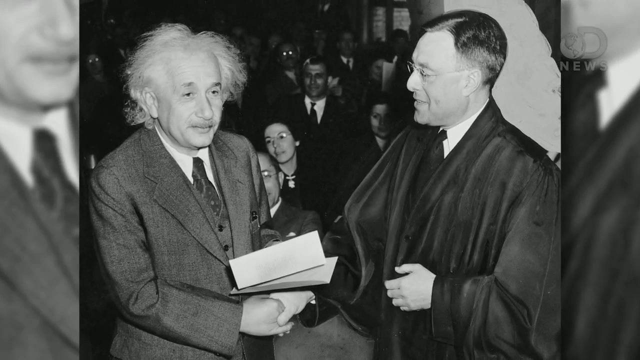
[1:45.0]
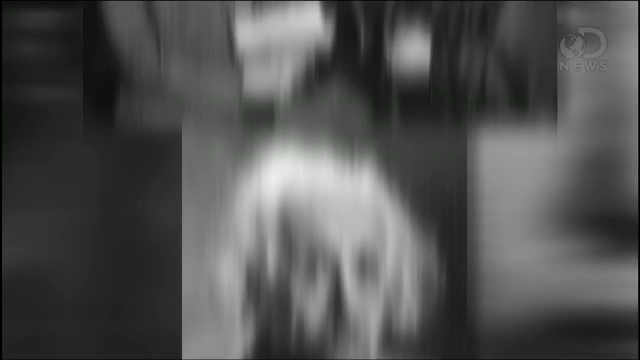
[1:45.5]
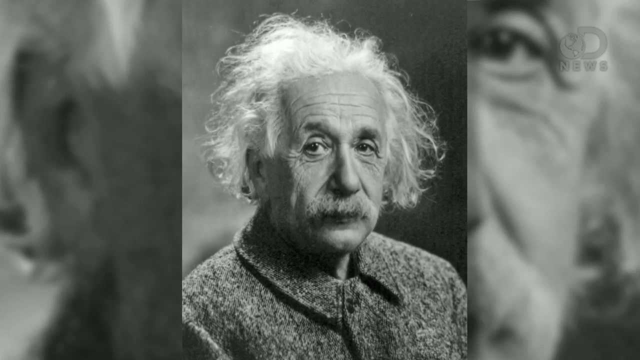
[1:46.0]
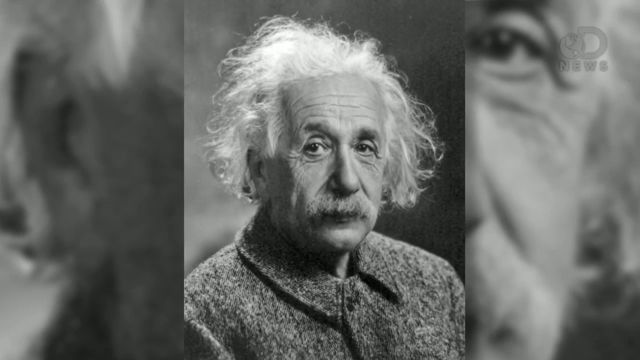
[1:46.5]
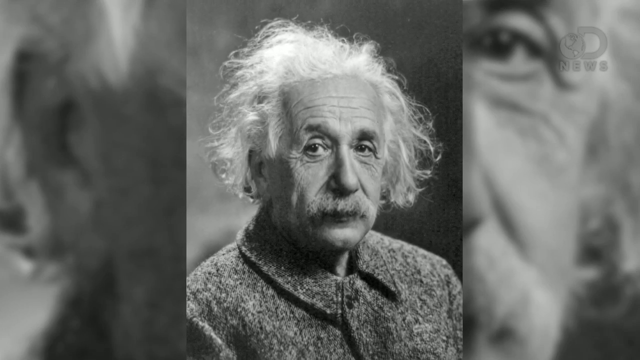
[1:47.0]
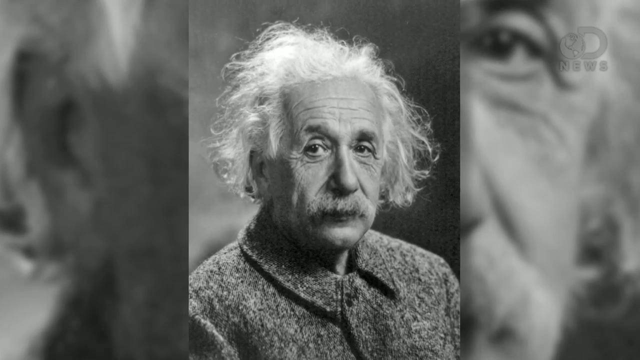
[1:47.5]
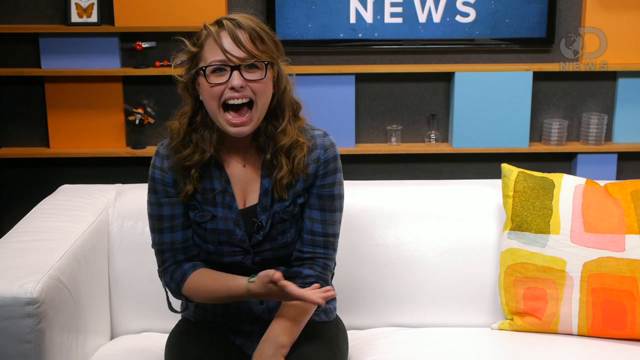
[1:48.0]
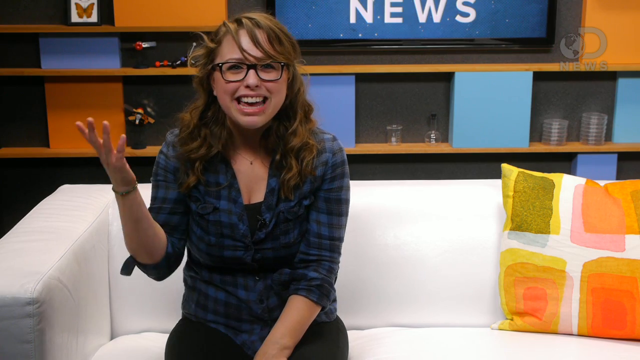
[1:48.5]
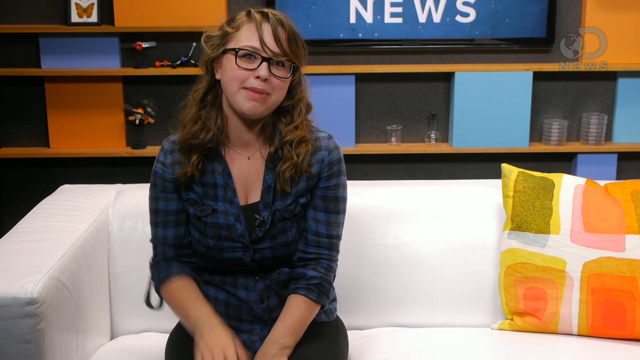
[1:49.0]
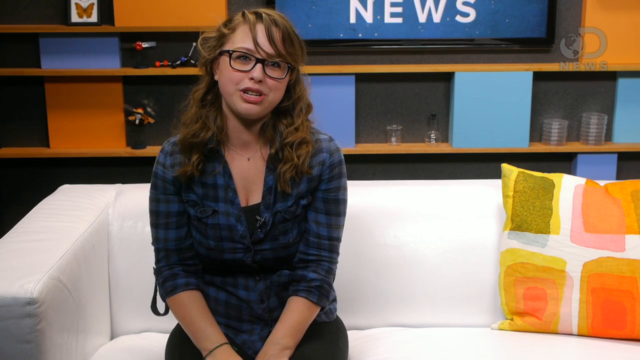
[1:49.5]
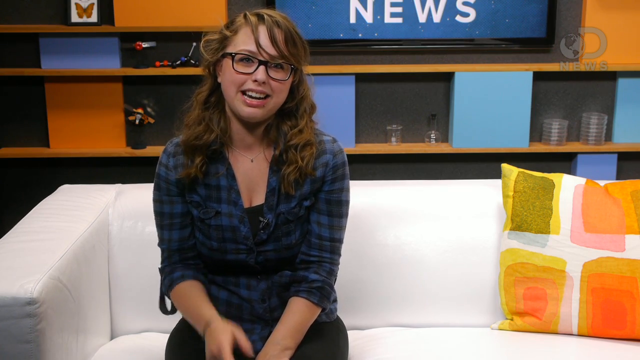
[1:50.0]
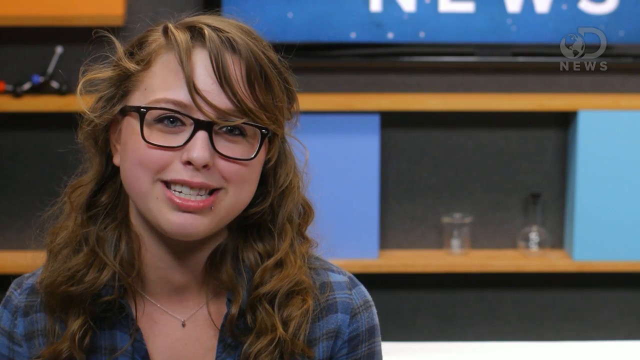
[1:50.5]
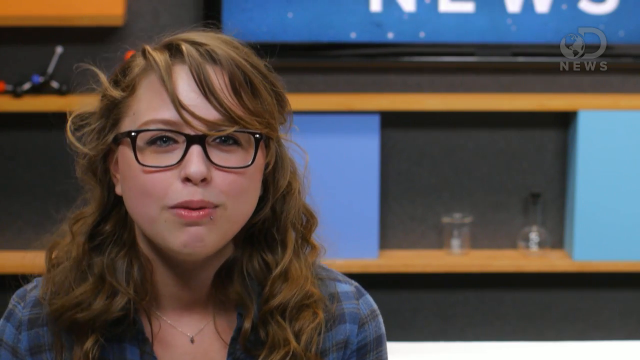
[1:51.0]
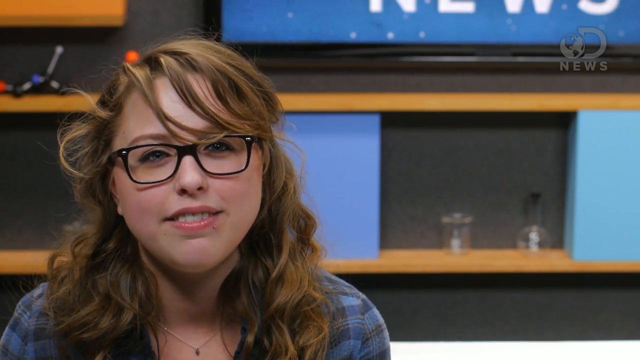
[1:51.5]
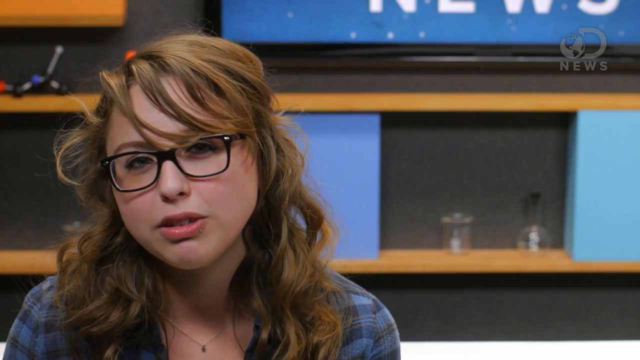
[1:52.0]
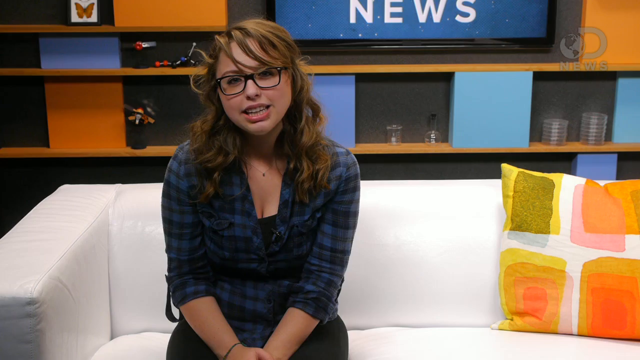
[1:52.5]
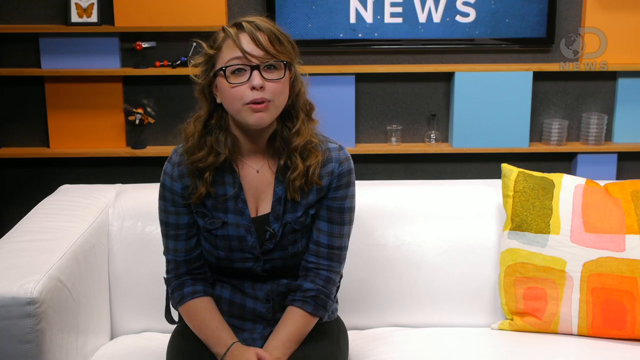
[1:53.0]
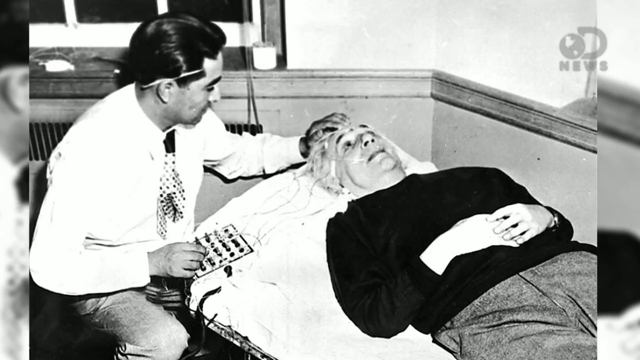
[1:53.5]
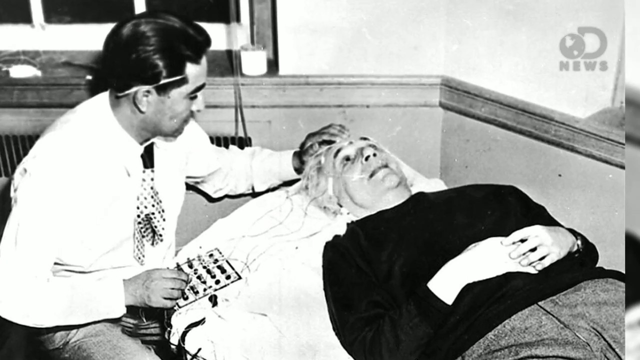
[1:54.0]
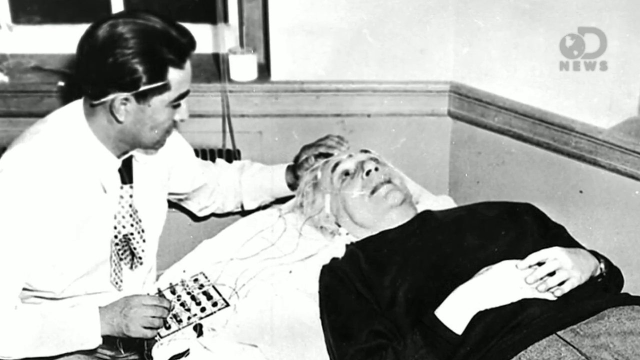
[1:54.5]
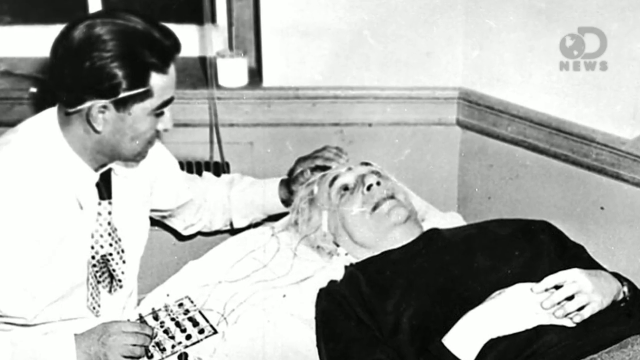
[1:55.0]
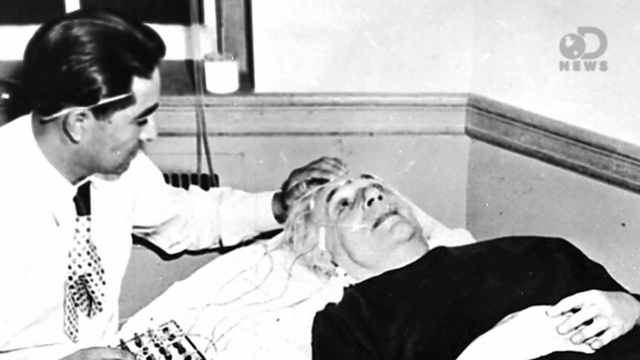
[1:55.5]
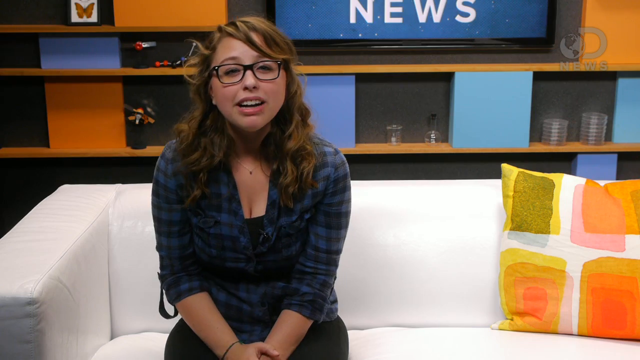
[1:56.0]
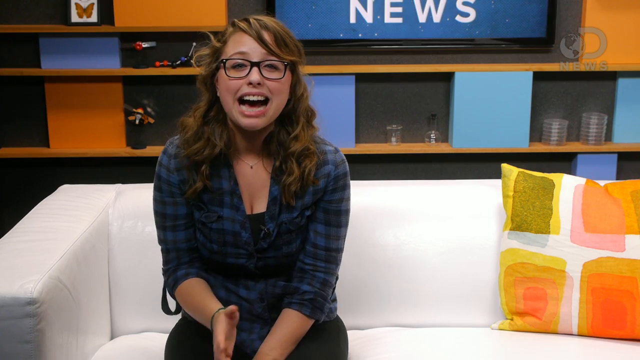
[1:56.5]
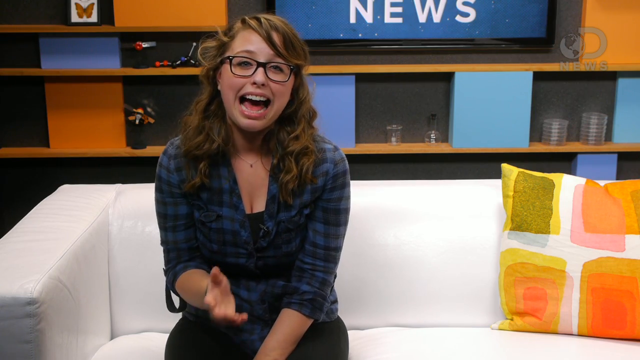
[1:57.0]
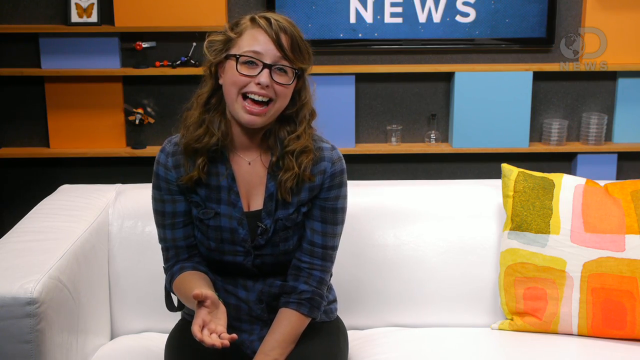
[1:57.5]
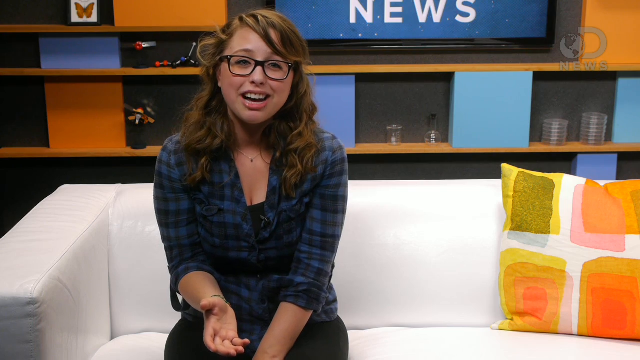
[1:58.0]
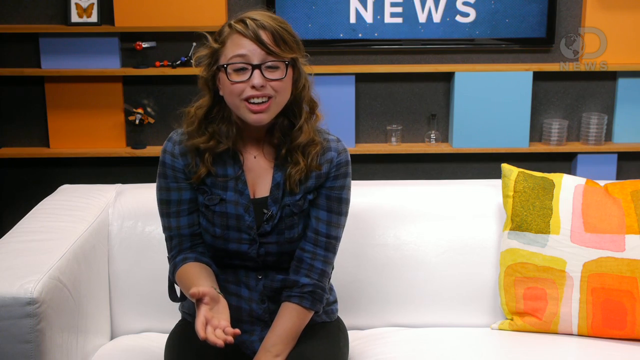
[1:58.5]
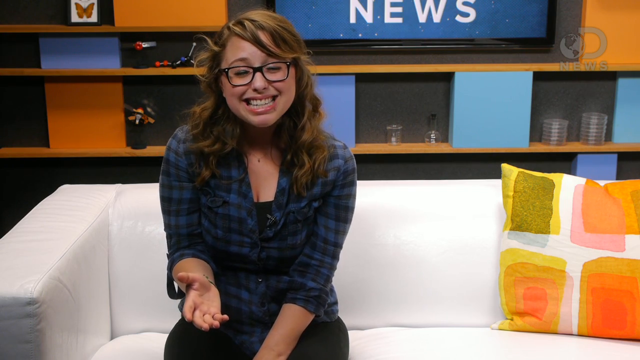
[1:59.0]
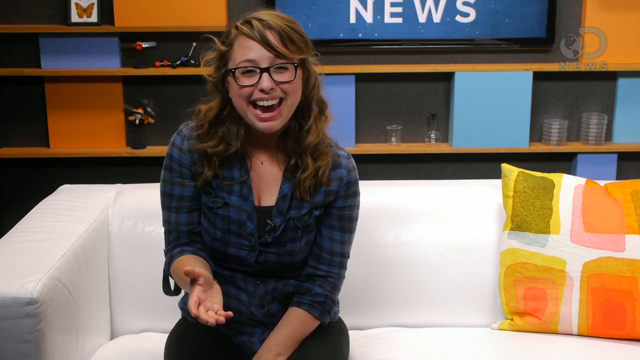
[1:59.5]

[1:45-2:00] Einstein is shown older, with a bushy mustache and white, kind of crazy hair, getting an award and shaking hands with a person in a dark black robe. A black and white picture shows someone lying on a table with electrodes connected to their head; the man has his back propped up with a white pillow, wears a dark shirt and gray pants, and has both hands kind of spread over his stomach area. Sitting beside him is maybe a doctor or scientist running some test, with a pencil behind his ear and something like a control board in his hand, apparently for turning on the electrodes. The video also cuts to what is maybe a scientific picture of an analyzed section of the brain, which looks like a squiggle.